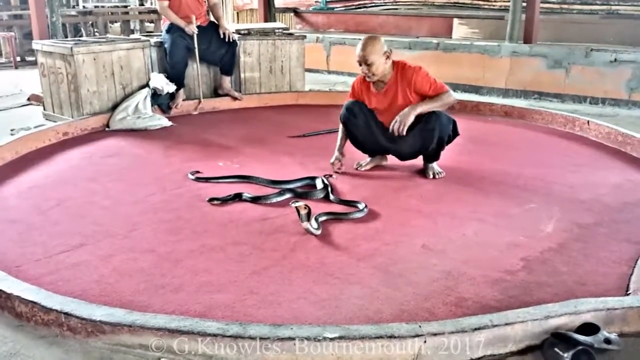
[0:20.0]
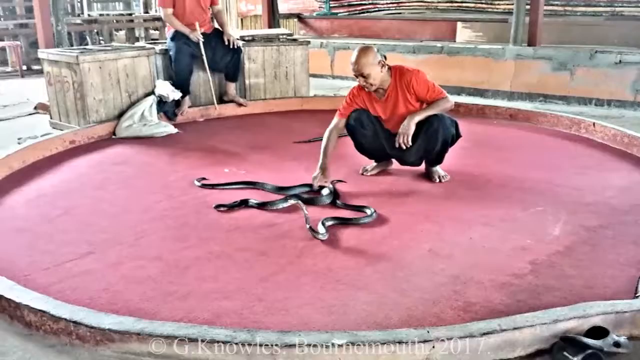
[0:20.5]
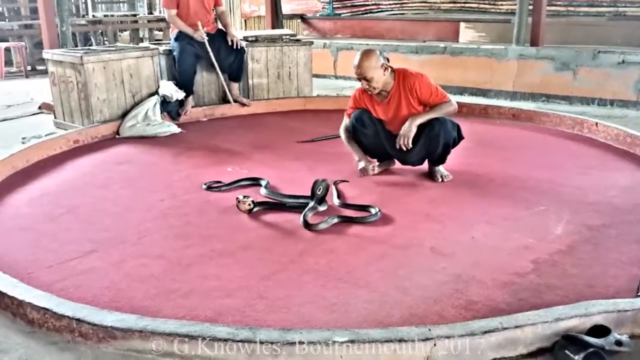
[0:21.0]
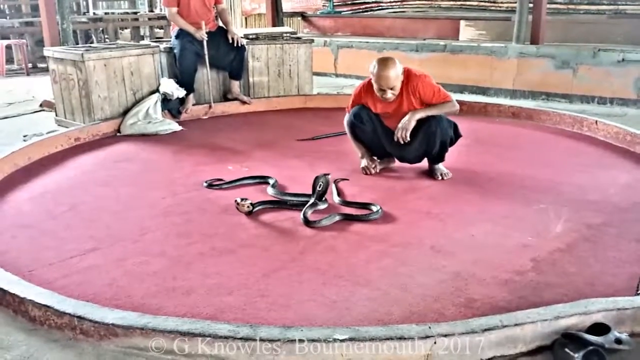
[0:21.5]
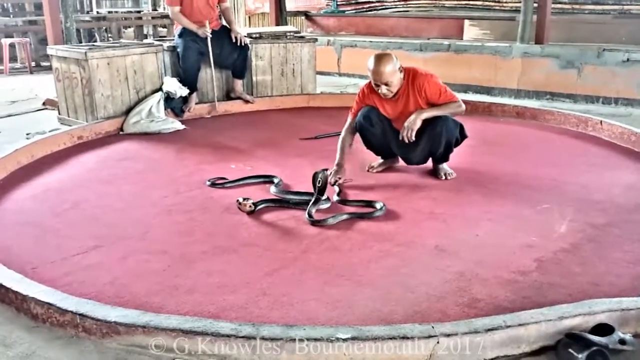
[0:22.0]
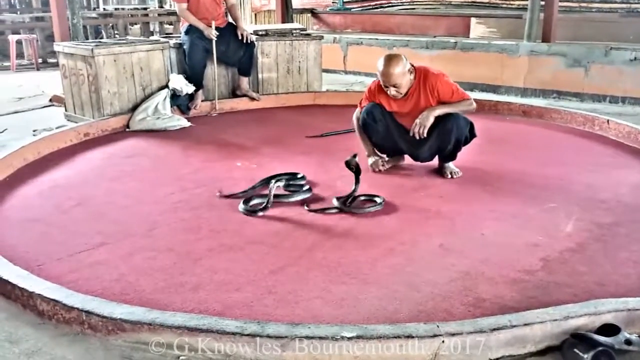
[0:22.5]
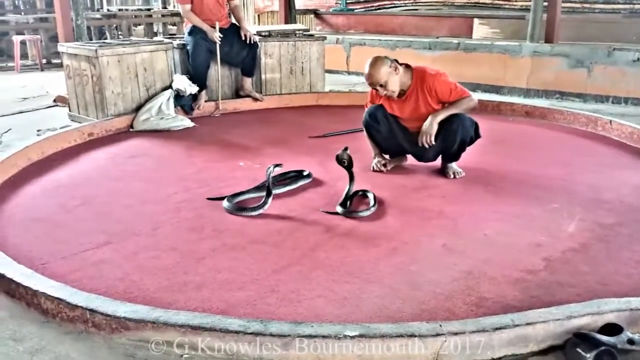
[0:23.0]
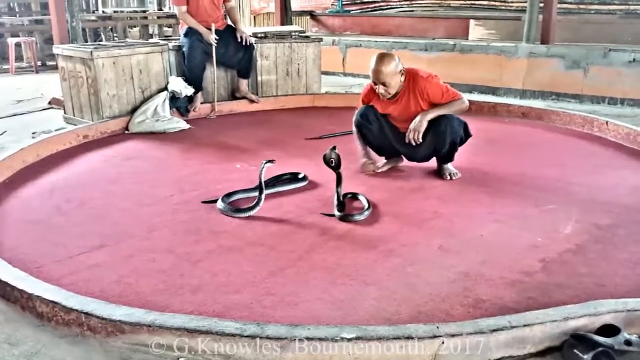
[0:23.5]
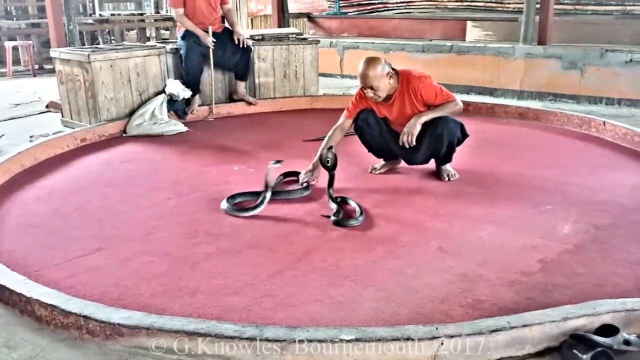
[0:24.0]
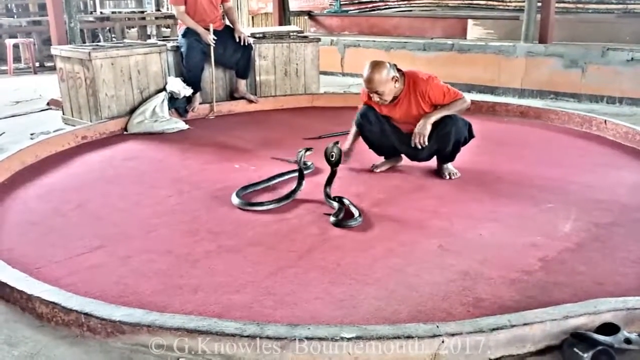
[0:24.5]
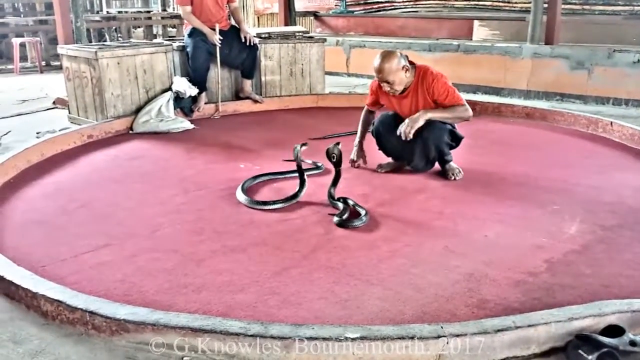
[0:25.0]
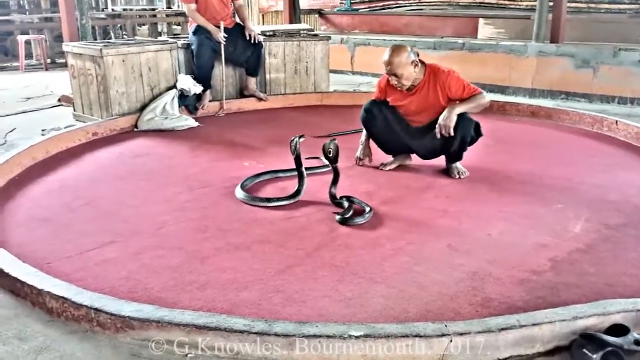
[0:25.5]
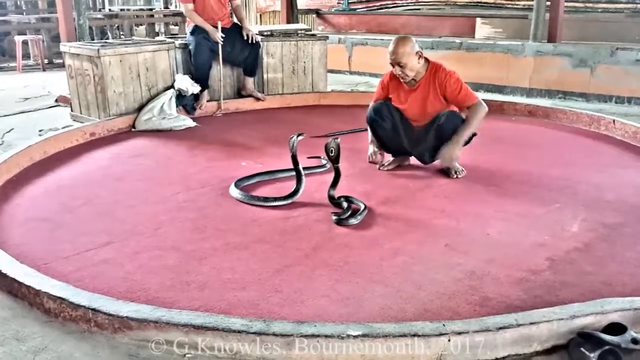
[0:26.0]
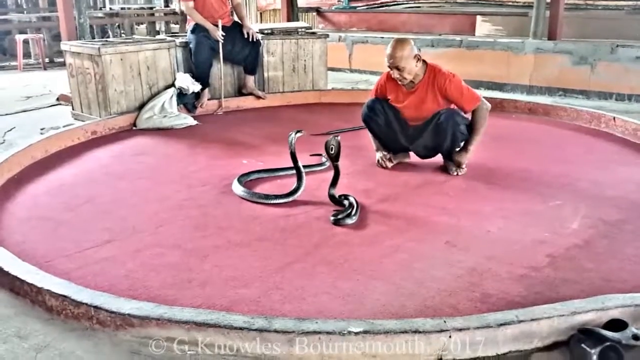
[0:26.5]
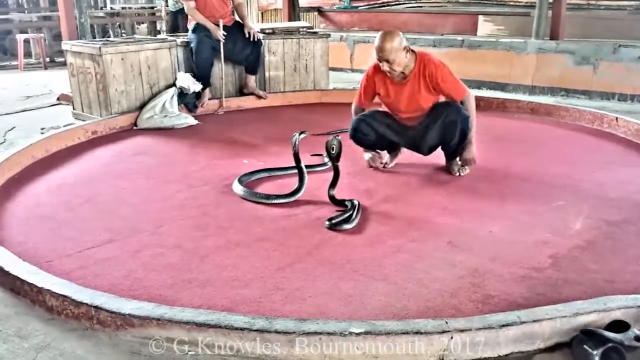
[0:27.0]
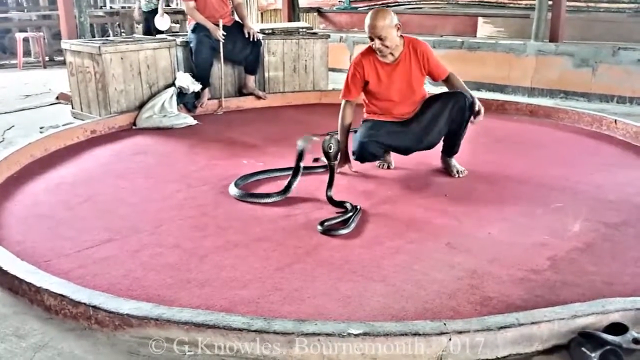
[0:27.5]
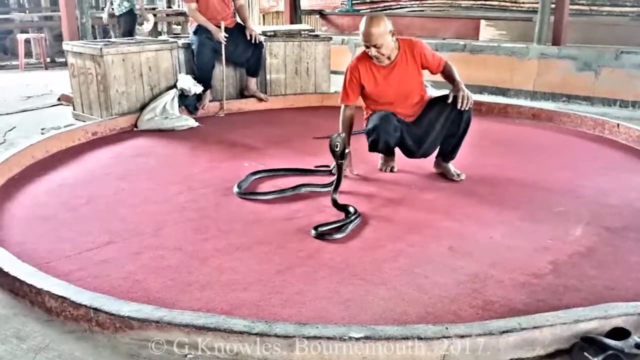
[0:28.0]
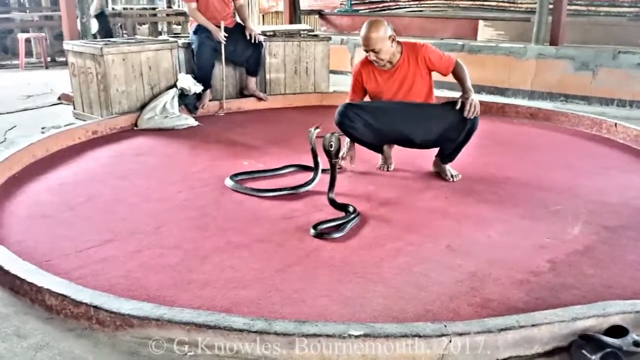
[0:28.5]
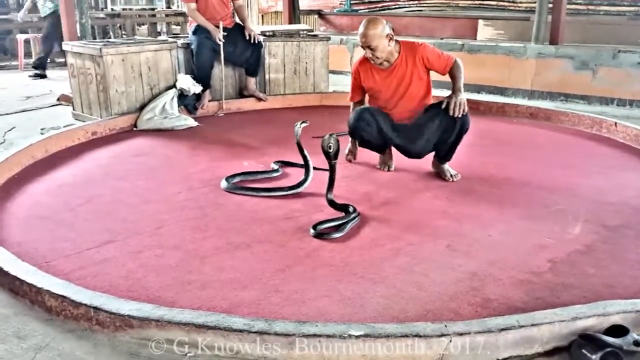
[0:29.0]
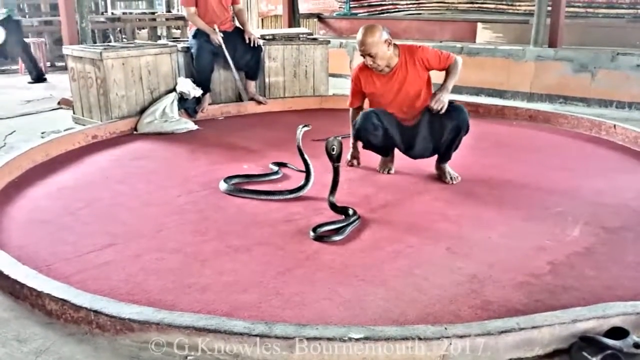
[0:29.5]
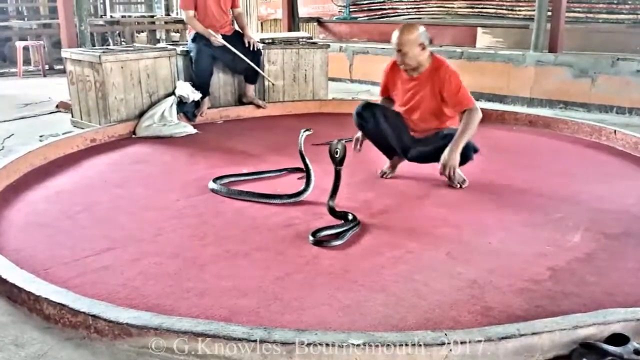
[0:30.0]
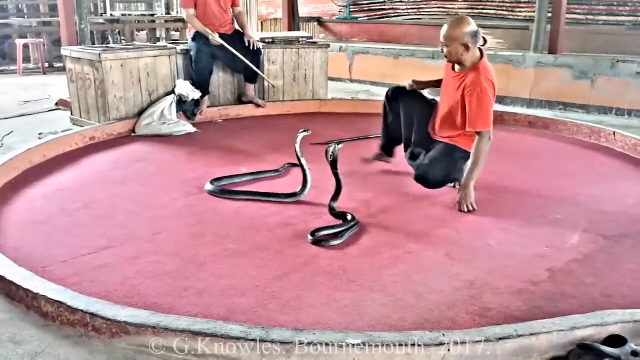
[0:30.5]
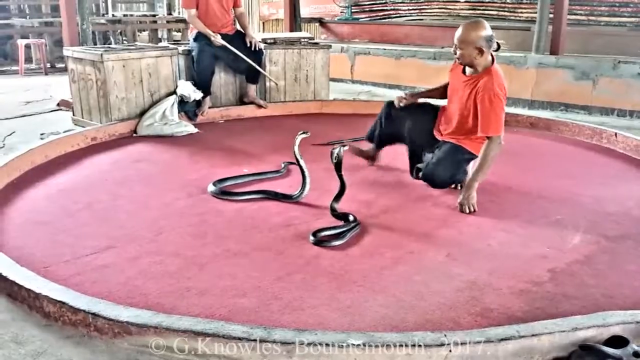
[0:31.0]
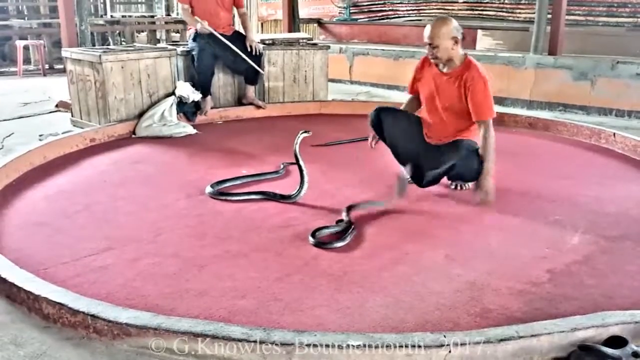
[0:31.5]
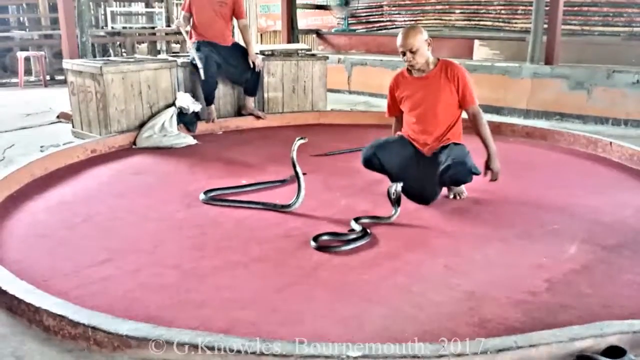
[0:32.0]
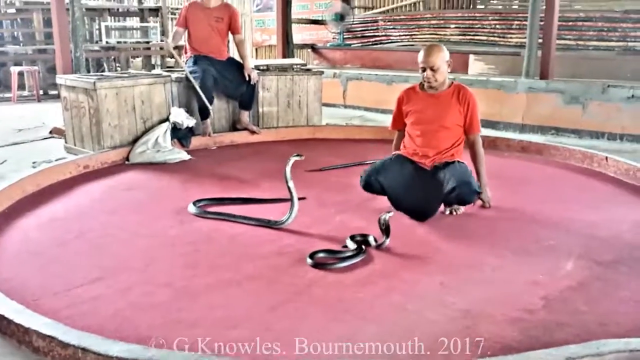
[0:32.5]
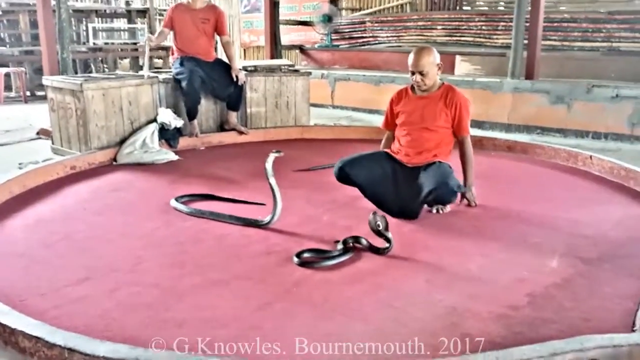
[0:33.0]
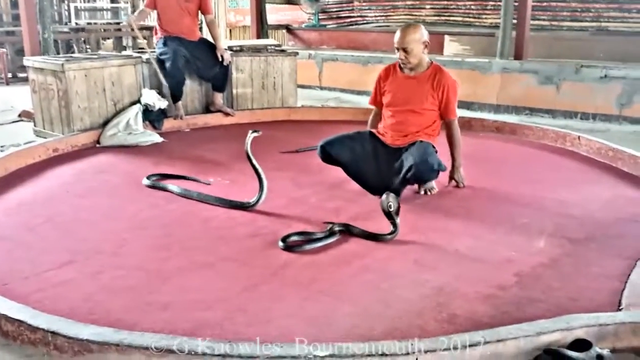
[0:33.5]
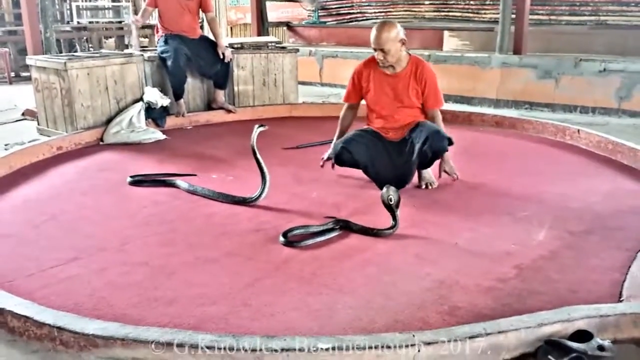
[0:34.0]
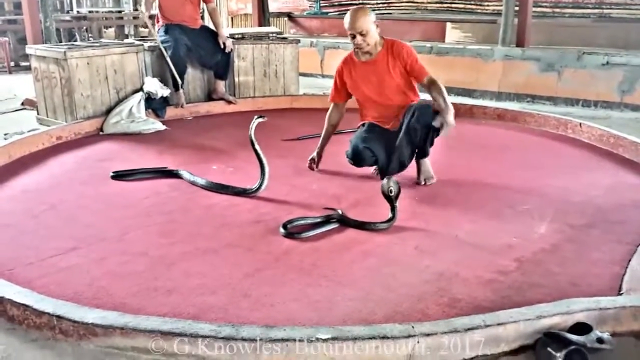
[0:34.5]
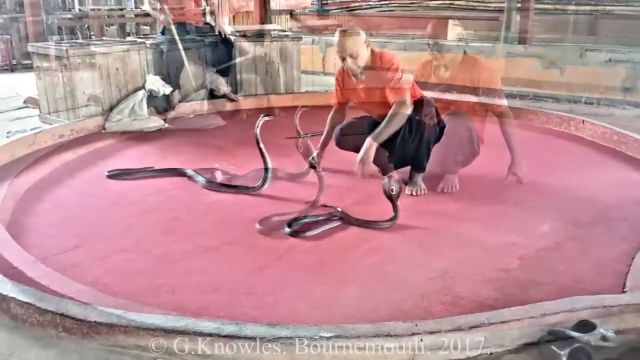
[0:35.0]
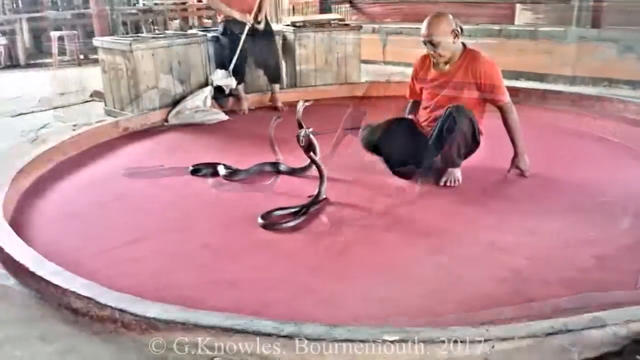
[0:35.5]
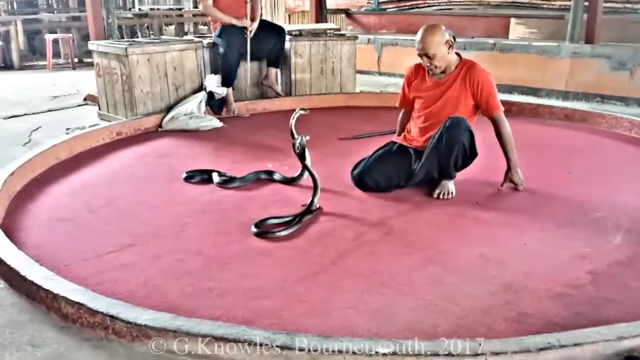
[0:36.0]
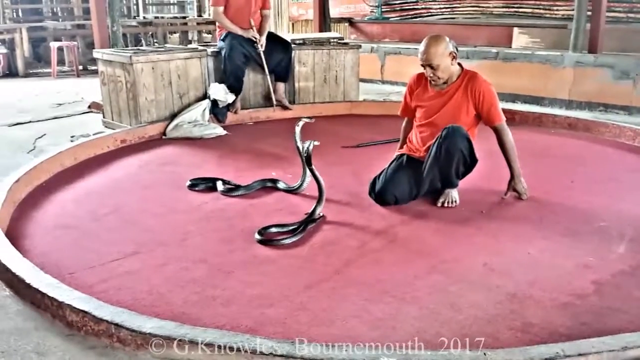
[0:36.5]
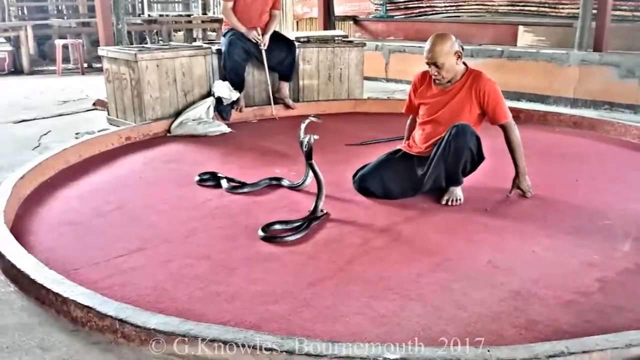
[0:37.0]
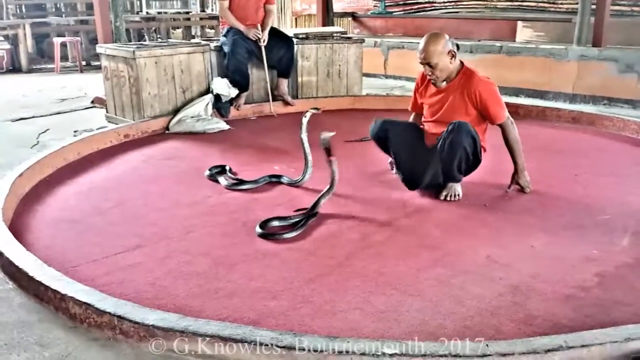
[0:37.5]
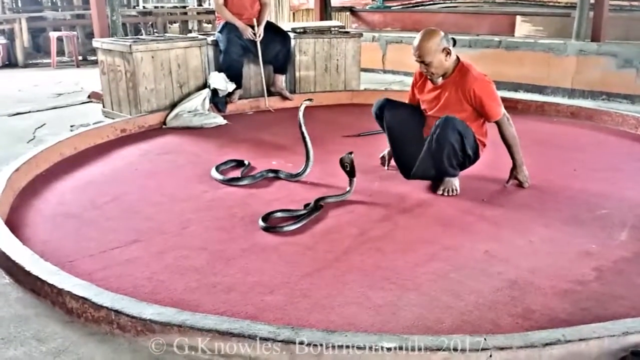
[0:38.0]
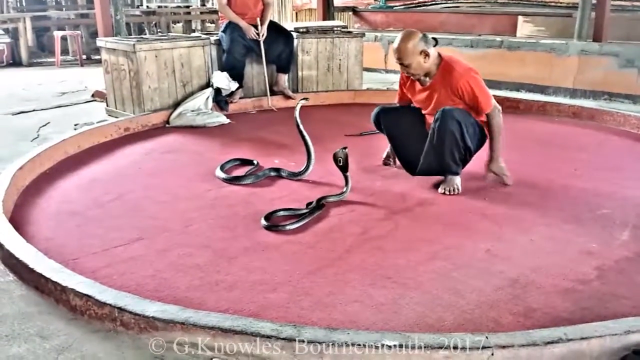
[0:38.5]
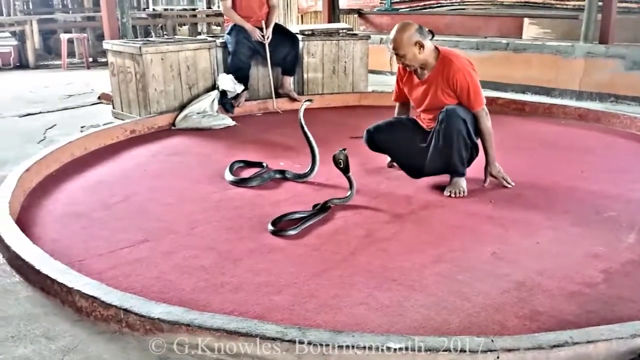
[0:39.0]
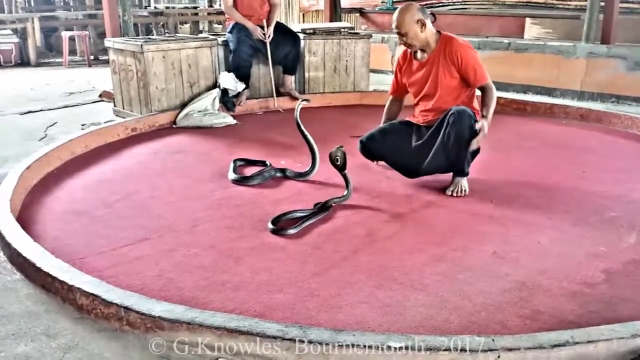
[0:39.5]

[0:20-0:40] The two men in orange-reddish shirts are messing around with the vipers on a pinkish circular floor. One man is squatting and messing around with the snakes, while the other has a hook and is sitting to the left. There appear to be two snakes in total on the floor in front of the squatting man. In a single setting, the man touches the snakes and moves in front of them while squatting. The vipers look like they lunge at him a couple of times, but they don't appear to bite him. A gradient transition leads to a very similar shot of the same thing happening. Next to the man sitting with the hook there looks to be some sort of white garbage on the floor. The background looks like some sort of city area that doesn't look the cleanest and looks a little run-down.